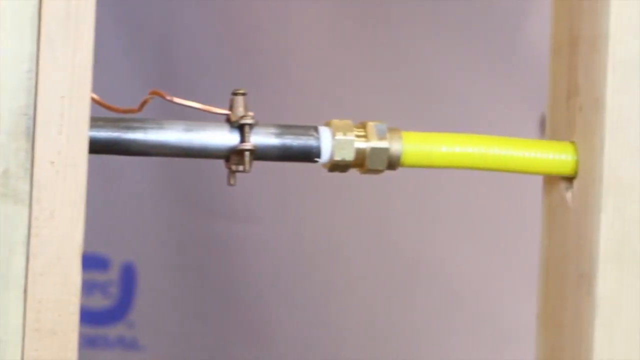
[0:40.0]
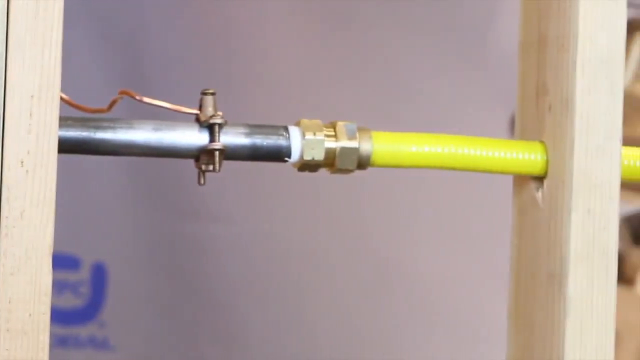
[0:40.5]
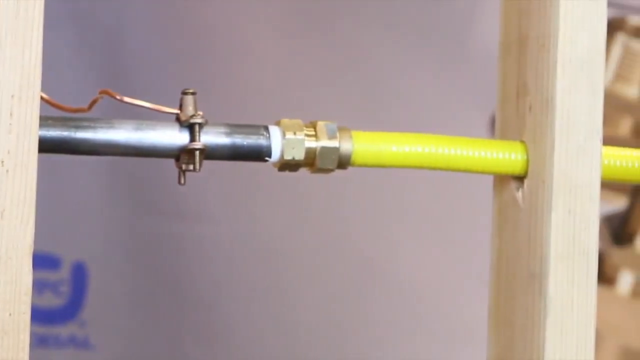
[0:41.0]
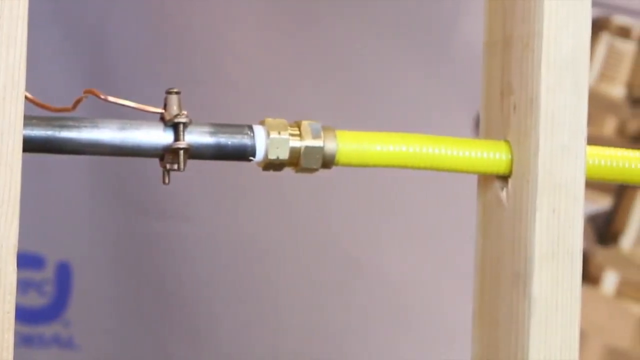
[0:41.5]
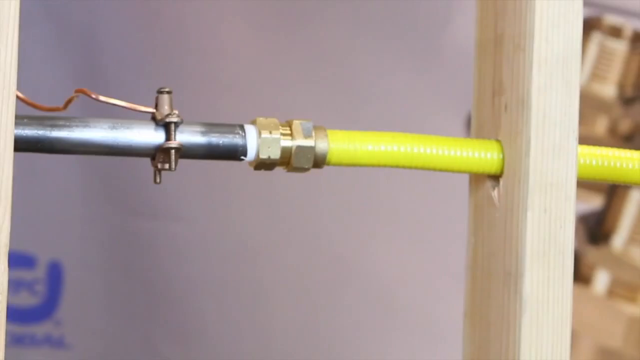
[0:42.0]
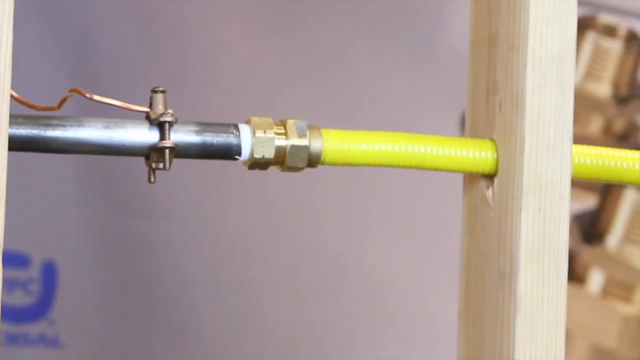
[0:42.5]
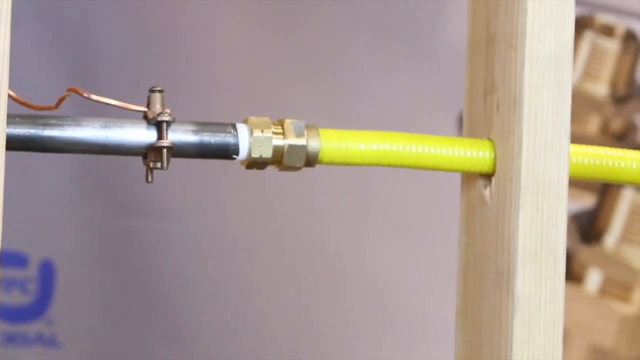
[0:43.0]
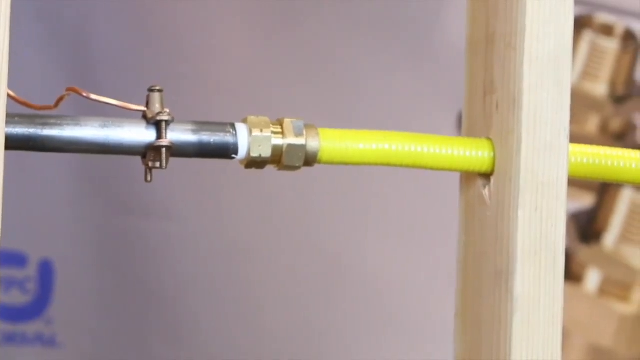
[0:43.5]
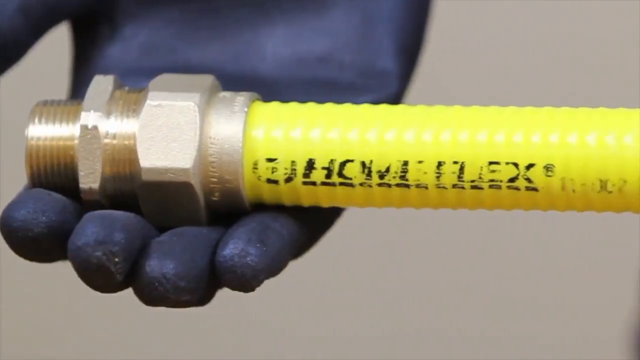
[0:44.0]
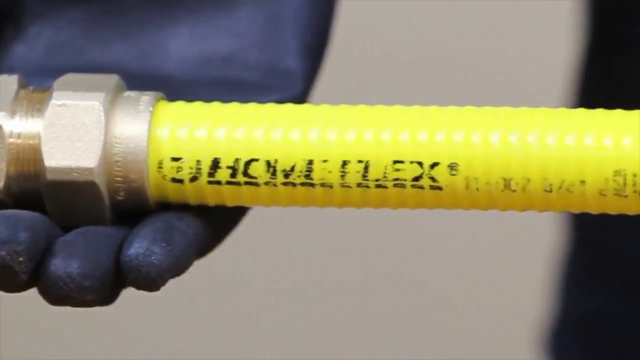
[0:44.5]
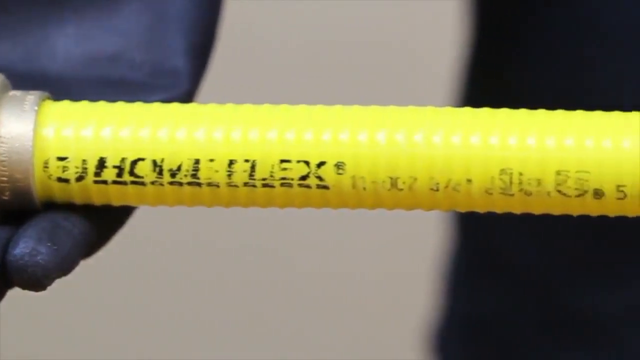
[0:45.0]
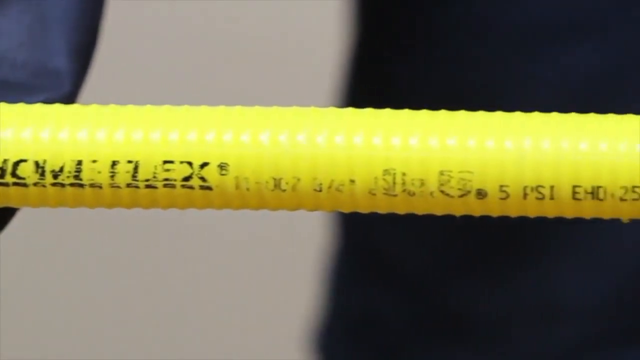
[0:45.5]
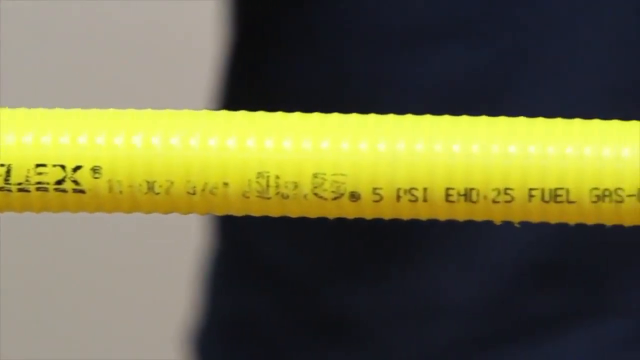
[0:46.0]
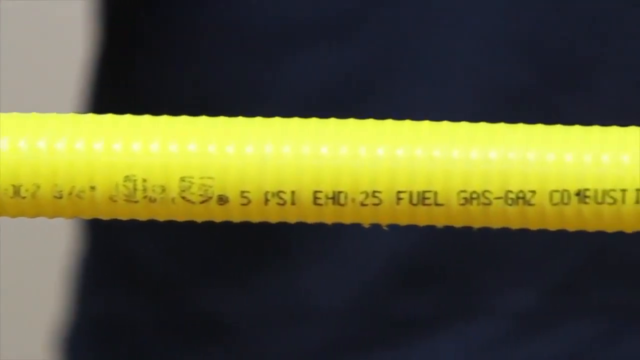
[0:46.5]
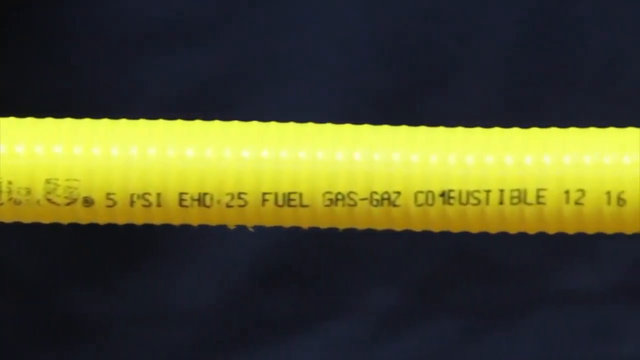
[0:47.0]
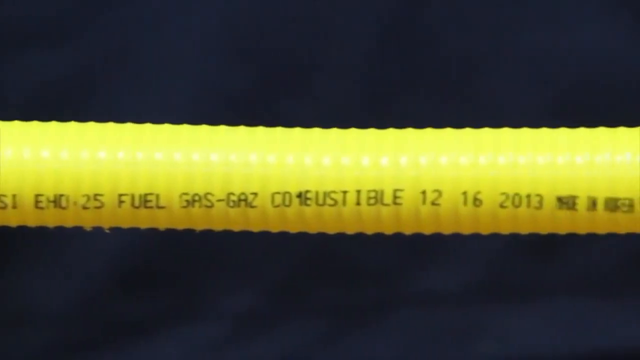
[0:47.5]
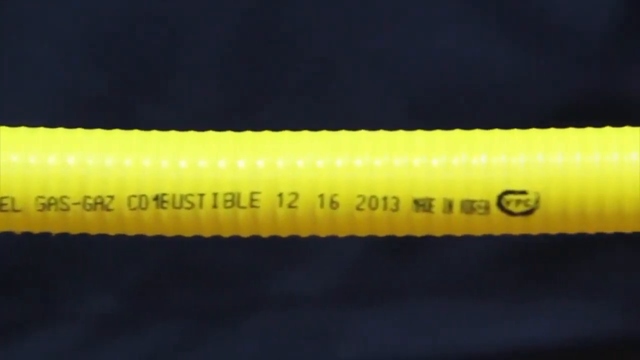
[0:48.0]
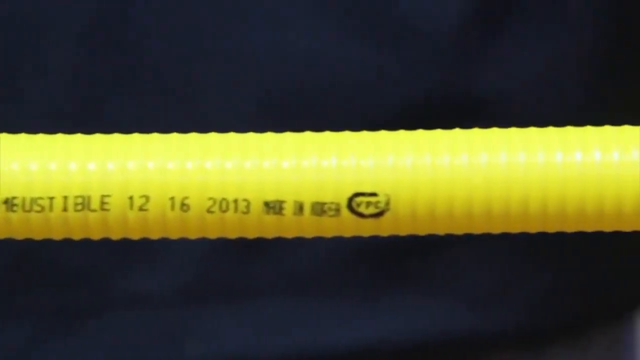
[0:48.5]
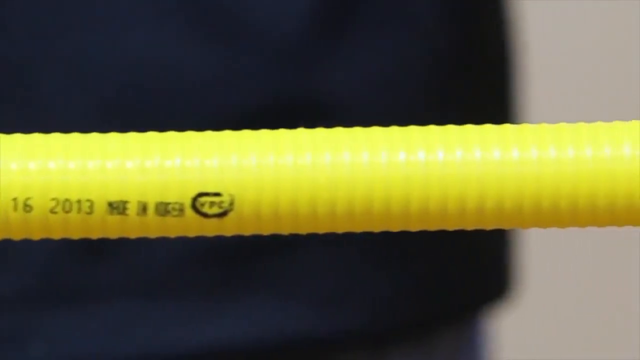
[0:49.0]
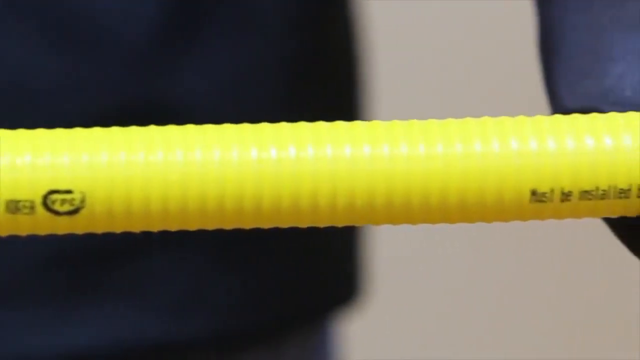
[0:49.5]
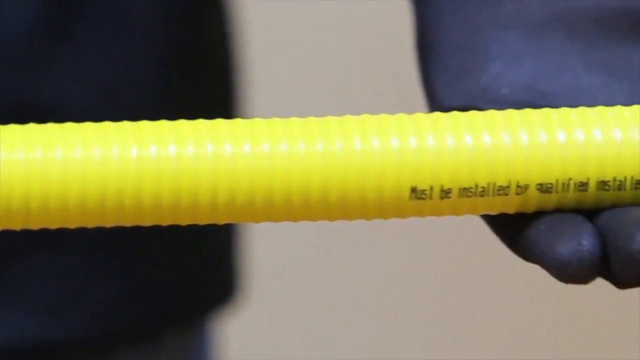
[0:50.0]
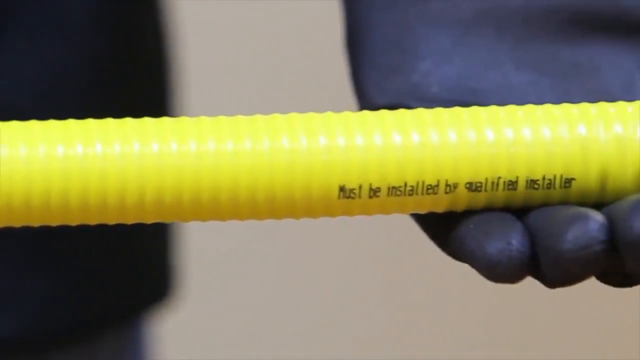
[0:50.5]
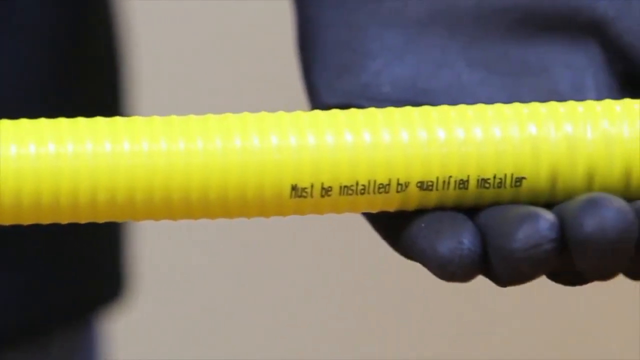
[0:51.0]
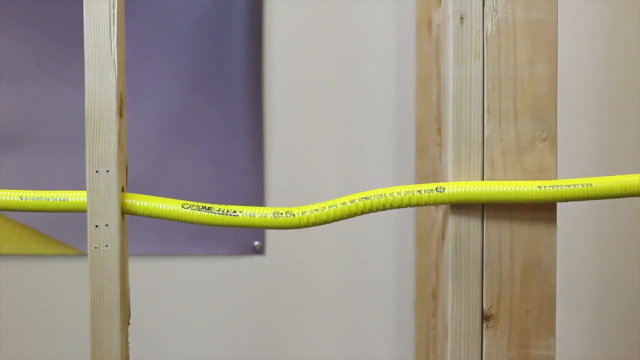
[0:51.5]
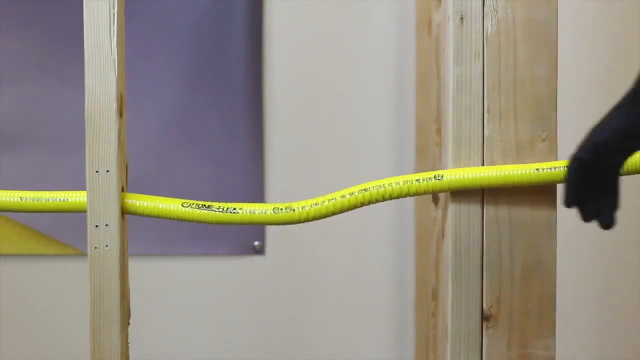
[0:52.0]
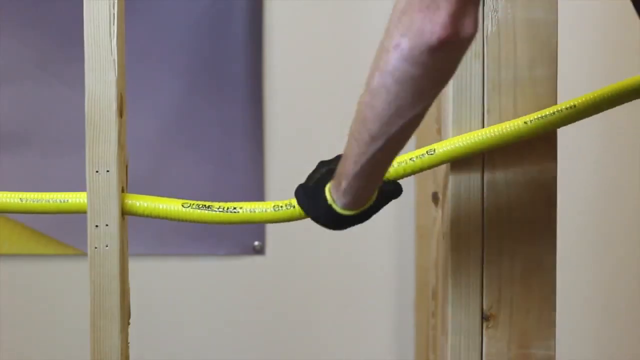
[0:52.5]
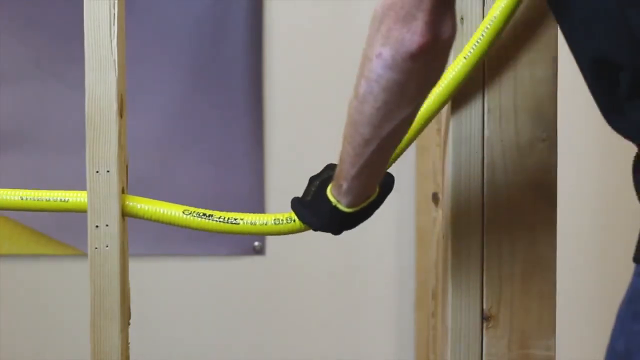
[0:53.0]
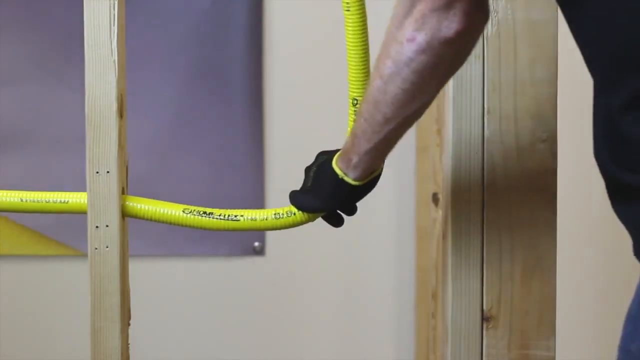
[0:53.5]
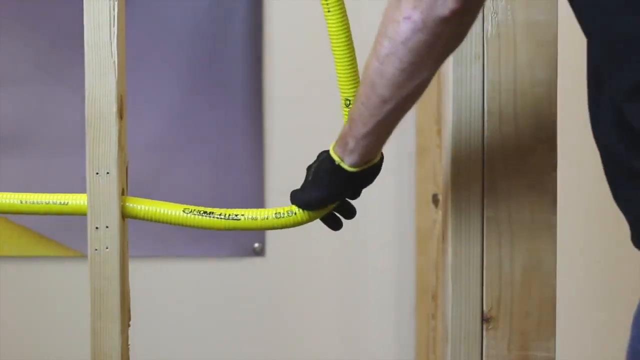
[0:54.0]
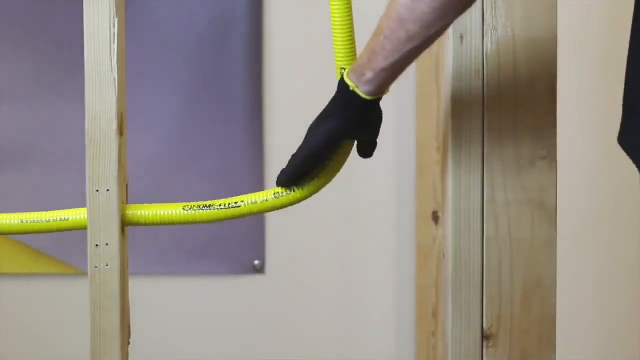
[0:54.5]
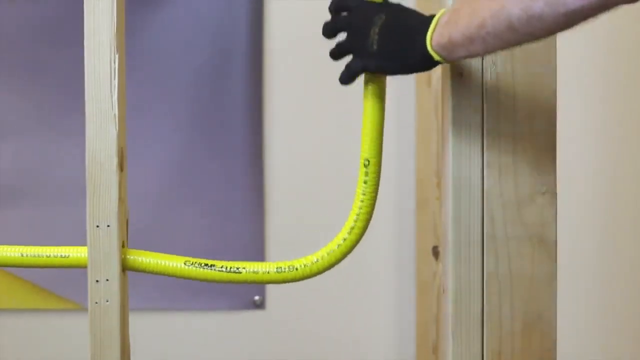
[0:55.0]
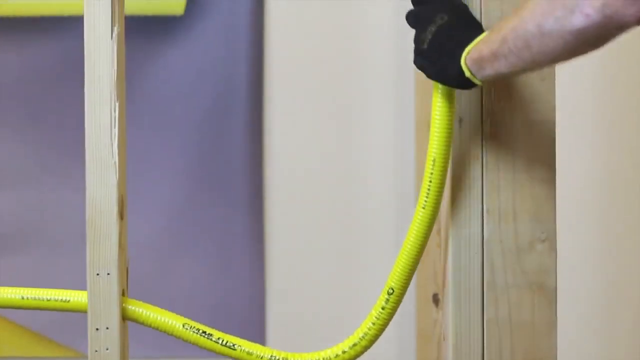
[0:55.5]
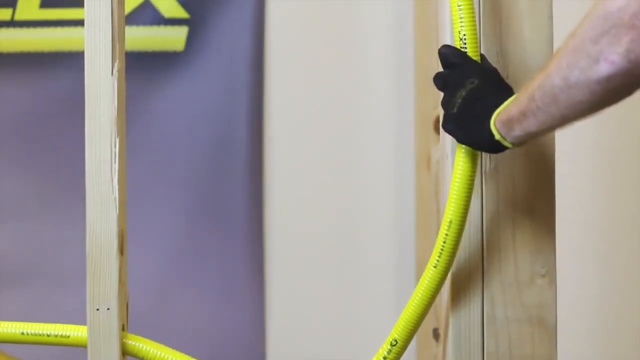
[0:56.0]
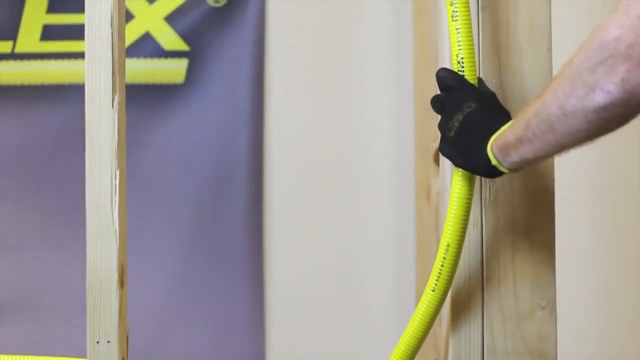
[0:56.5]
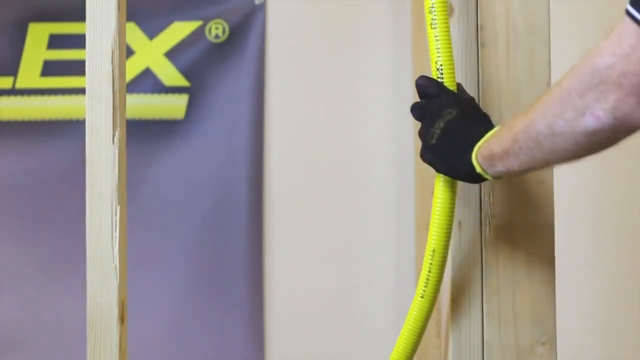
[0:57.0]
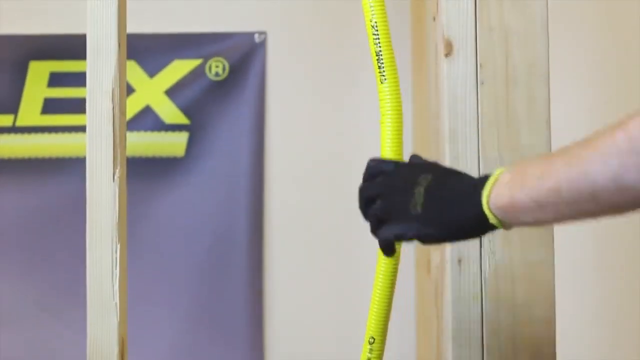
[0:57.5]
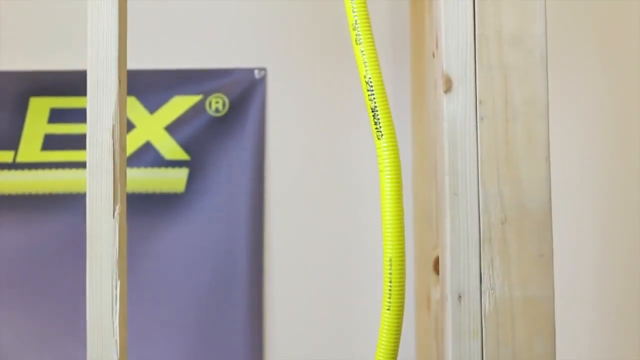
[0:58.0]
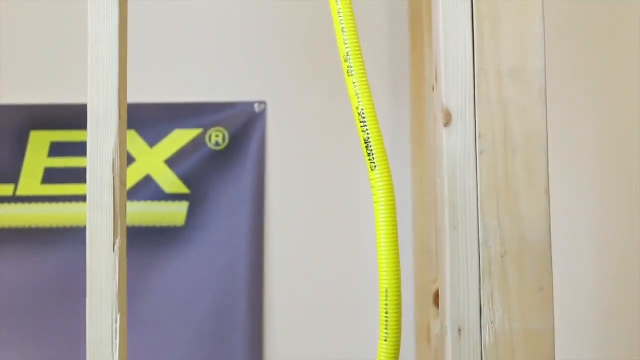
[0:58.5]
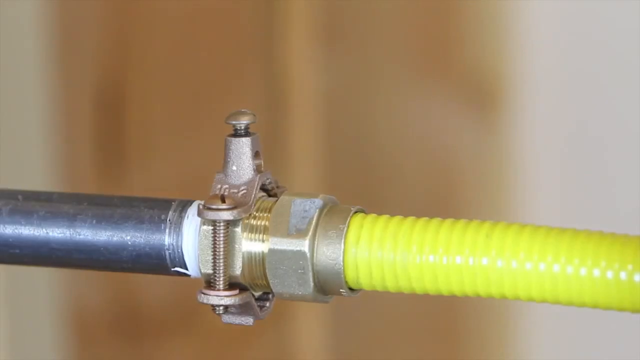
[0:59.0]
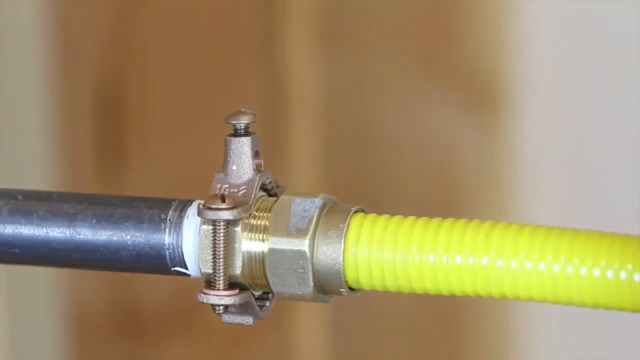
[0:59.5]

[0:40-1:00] Two wood beams are in view, one on the left and one on the right. Coming out of the left beam is a metal pipe, with a connector right in the middle, and on the right the yellow hose goes through the beam on the right. The camera pans right. A close-up of the yellow hose follows as the camera pans quickly to the right; white letters are etched into the bottom of the tube, including the words "fuel" and "gas". It looks like somebody is holding the hose with both hands to show it to the camera. Next, what appears to be an installation is shown: the hose goes through one of the wood beams, and hands in black gloves bend the hose upward toward another beam on the right.